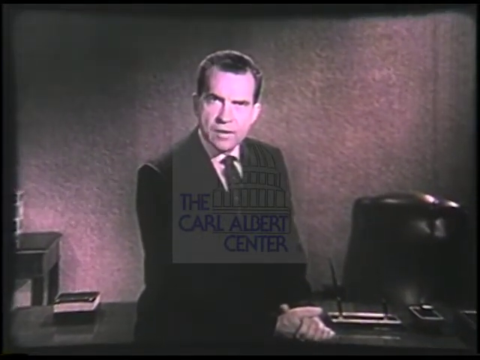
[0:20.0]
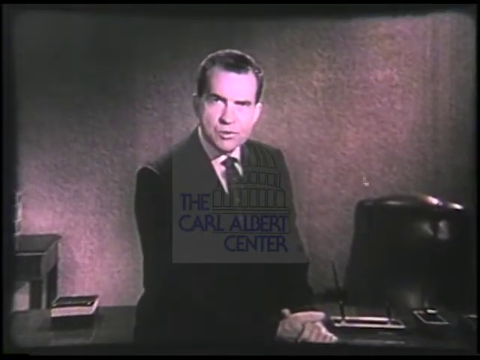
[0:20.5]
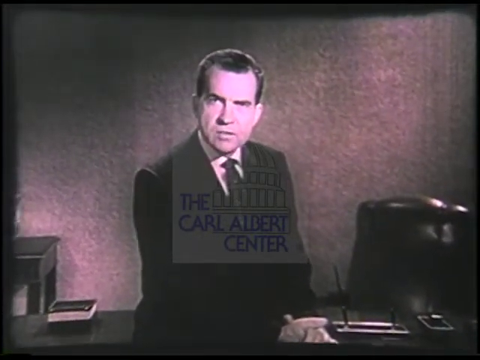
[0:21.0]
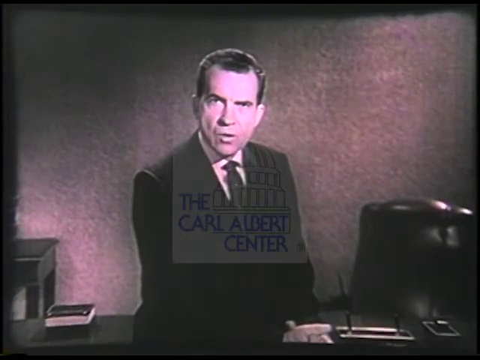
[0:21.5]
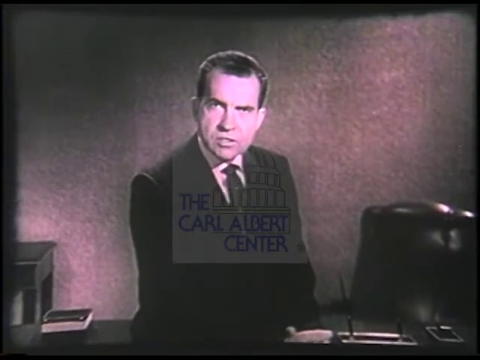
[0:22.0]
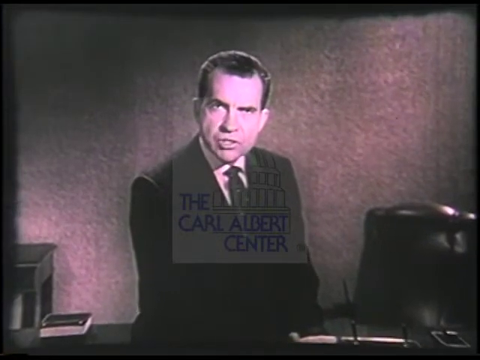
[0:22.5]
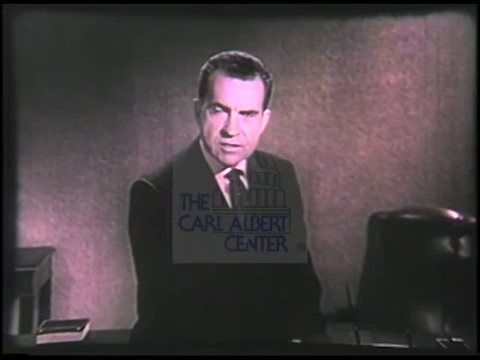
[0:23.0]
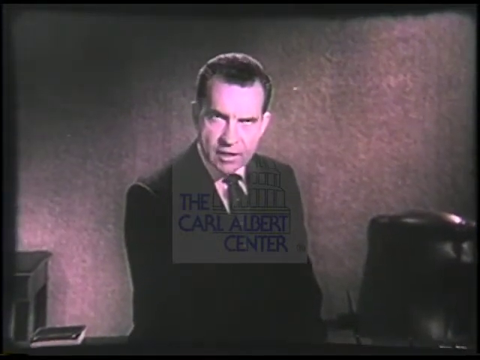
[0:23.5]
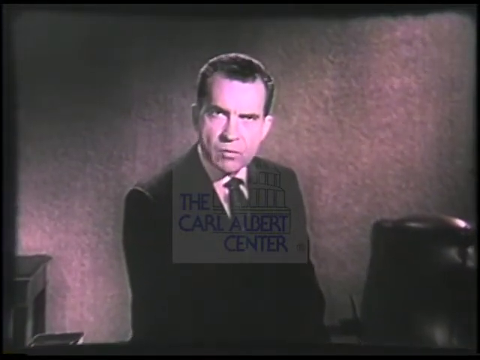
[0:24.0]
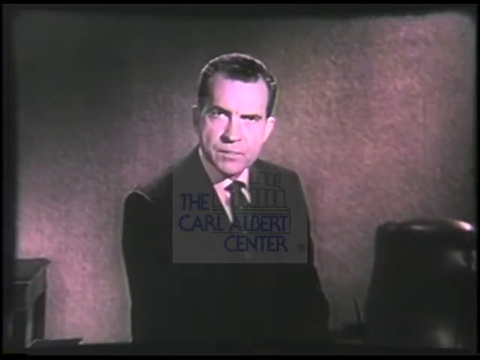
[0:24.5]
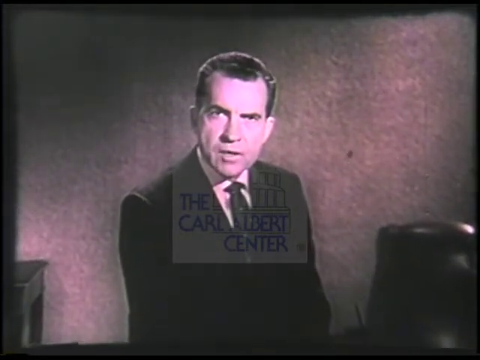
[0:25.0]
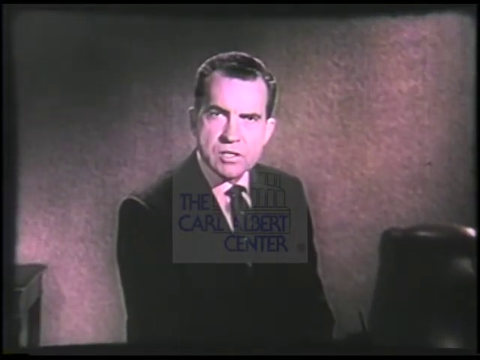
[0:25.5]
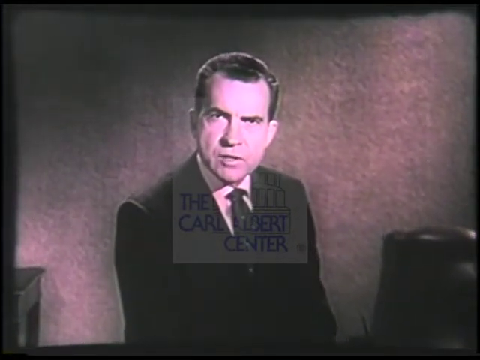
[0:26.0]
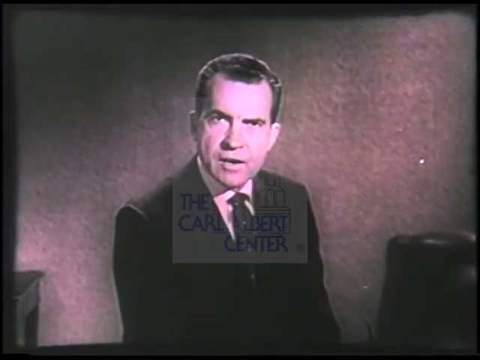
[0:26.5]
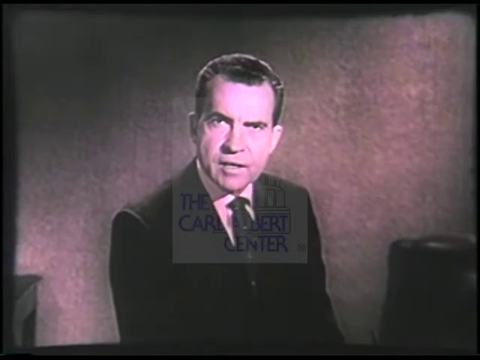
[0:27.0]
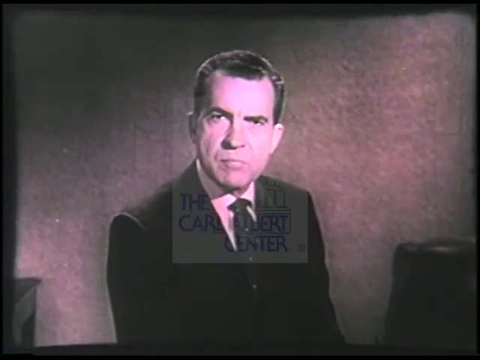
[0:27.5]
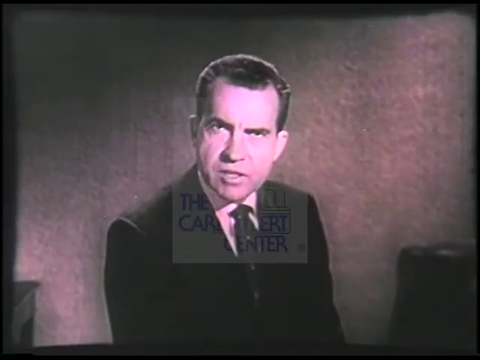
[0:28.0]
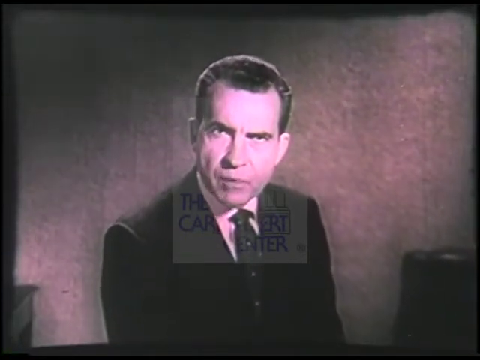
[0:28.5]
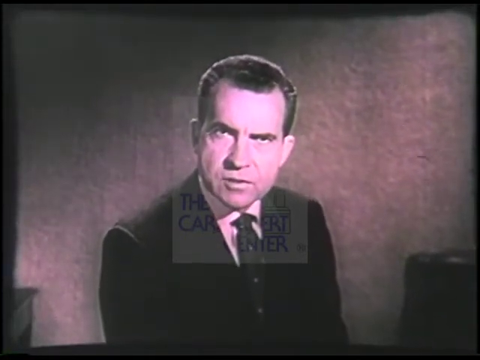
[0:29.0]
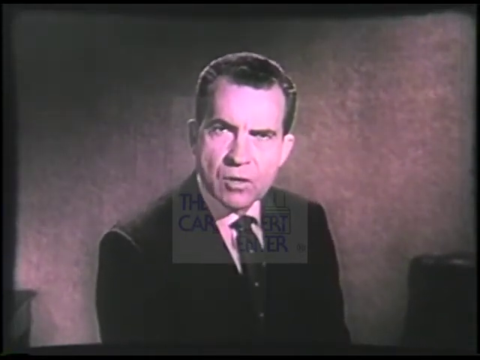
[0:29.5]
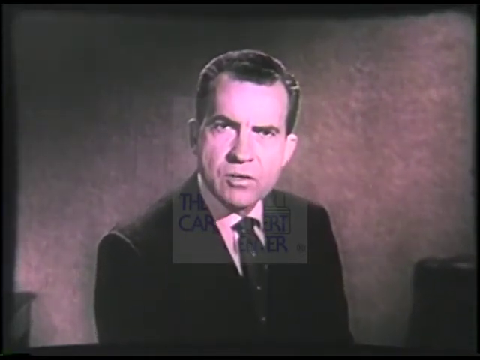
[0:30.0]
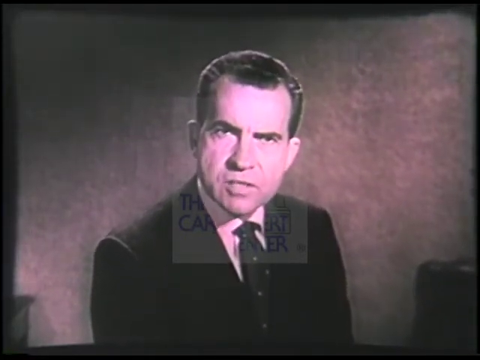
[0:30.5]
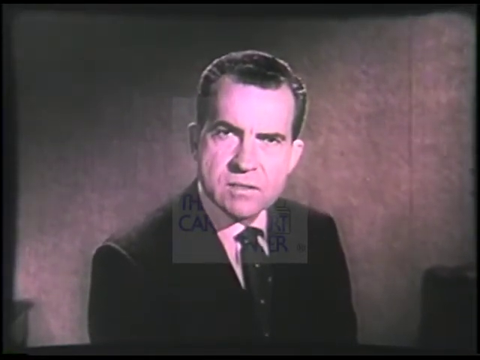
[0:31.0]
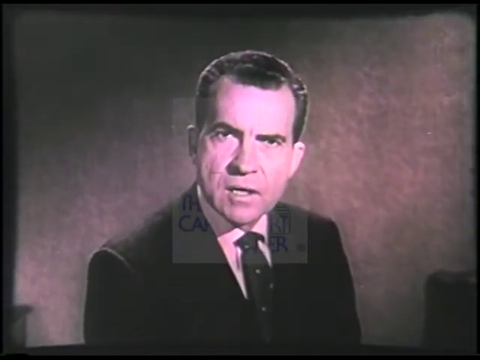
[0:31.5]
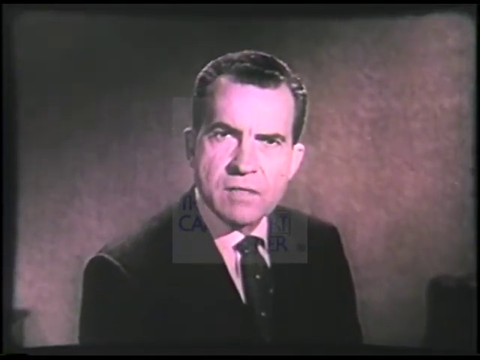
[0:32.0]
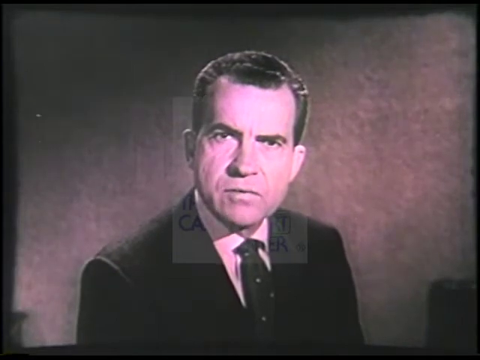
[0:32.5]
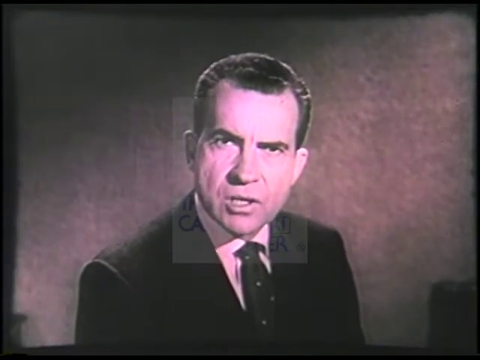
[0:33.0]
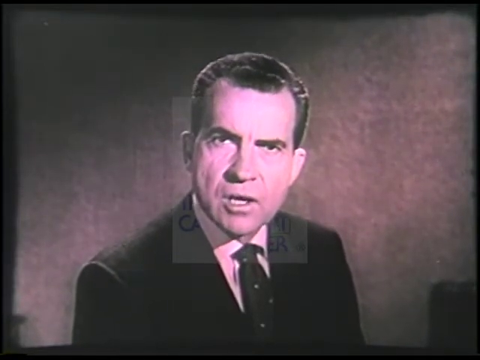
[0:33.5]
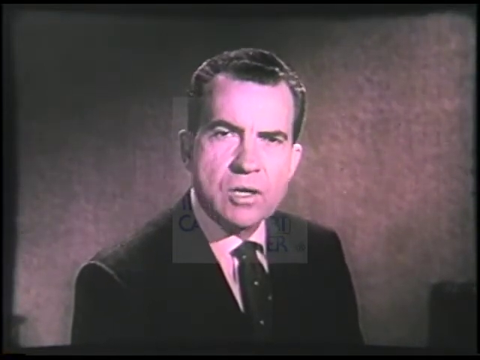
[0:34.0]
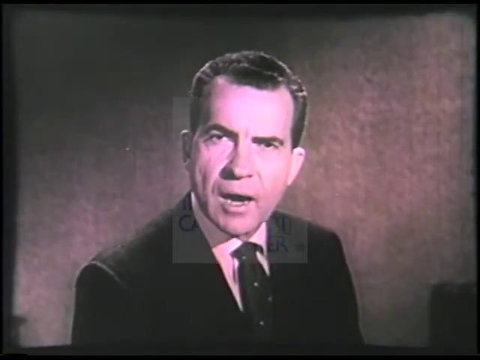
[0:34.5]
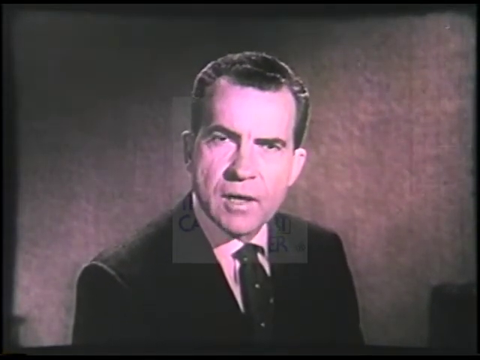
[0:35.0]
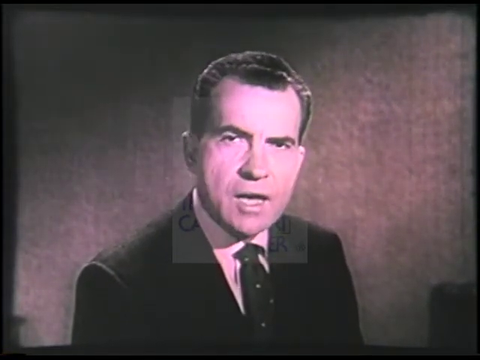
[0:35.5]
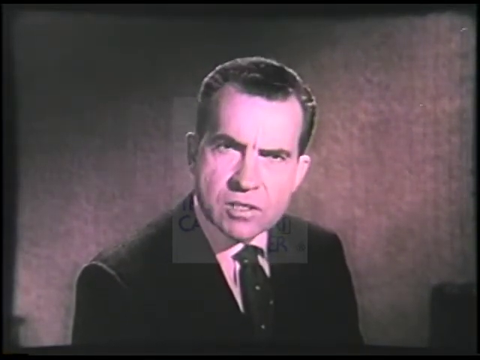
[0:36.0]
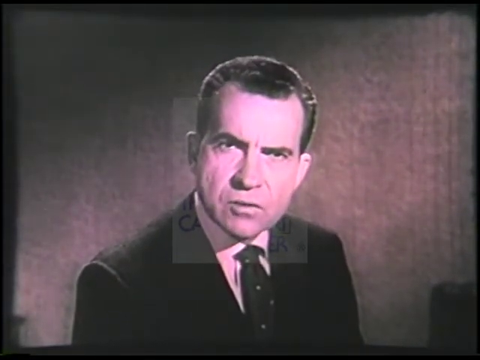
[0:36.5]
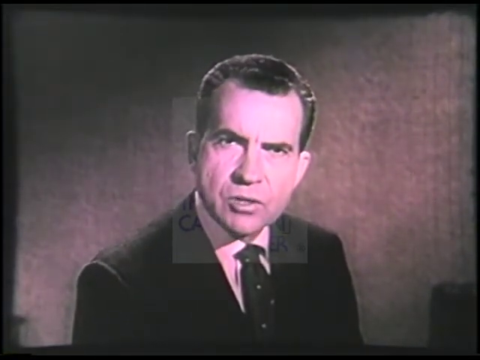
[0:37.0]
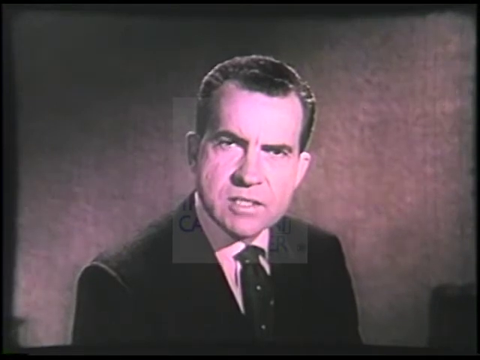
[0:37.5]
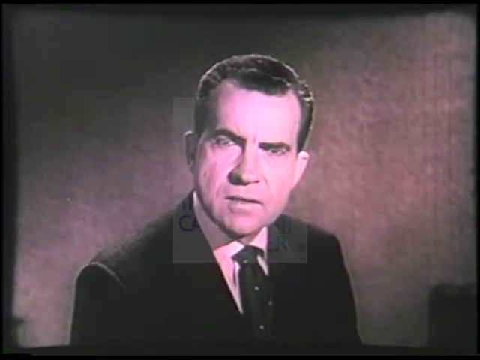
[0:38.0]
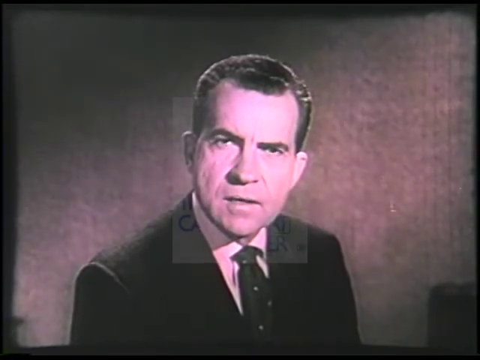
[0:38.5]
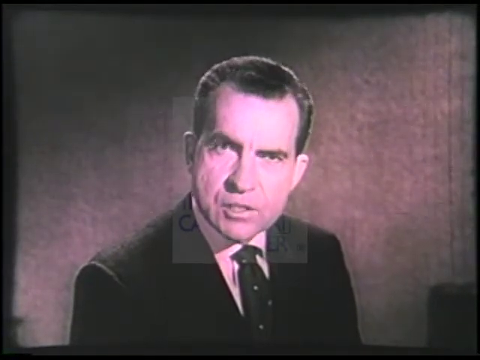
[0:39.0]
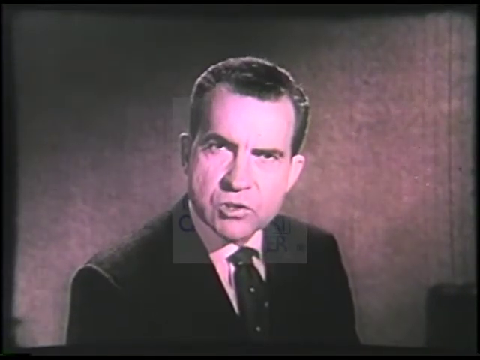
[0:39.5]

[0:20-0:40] Richard Nixon speaks very seriously into the camera as it slowly moves in. He is in a room, has short, dark hair, and is clean shaven, with a very serious look on his face. A book is on the desk, and to the left a pen is sticking up. Although there is a big leather chair, he sits on the front of his desk.